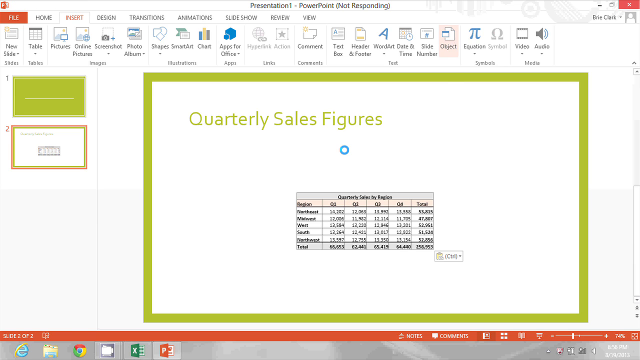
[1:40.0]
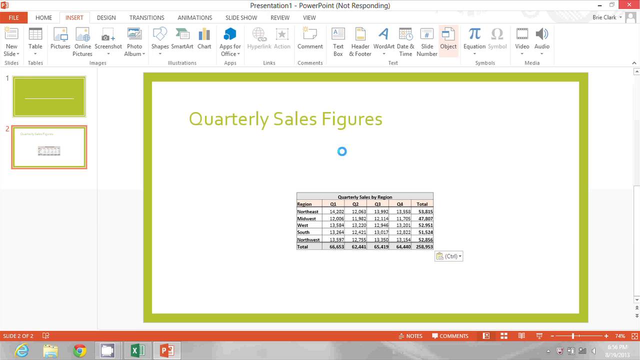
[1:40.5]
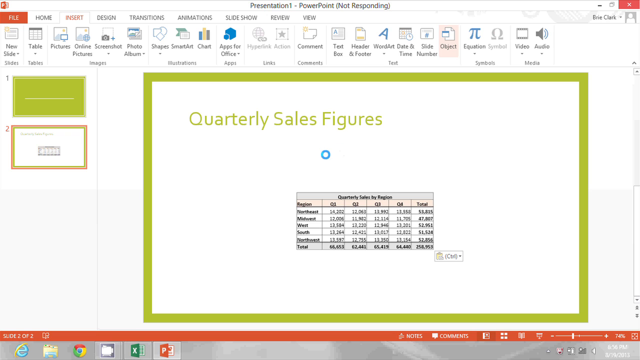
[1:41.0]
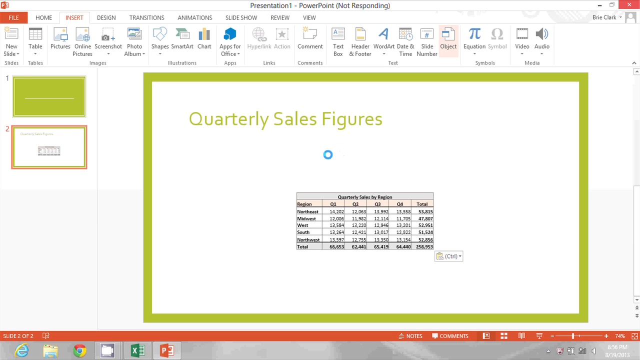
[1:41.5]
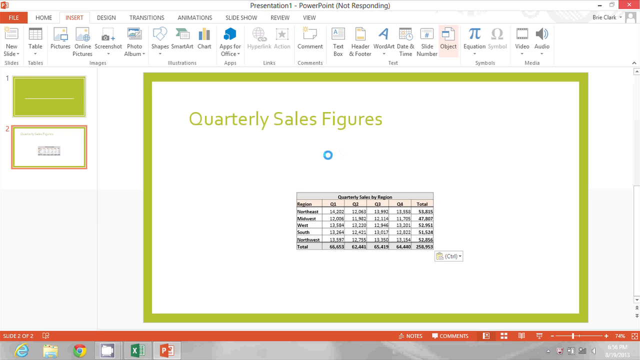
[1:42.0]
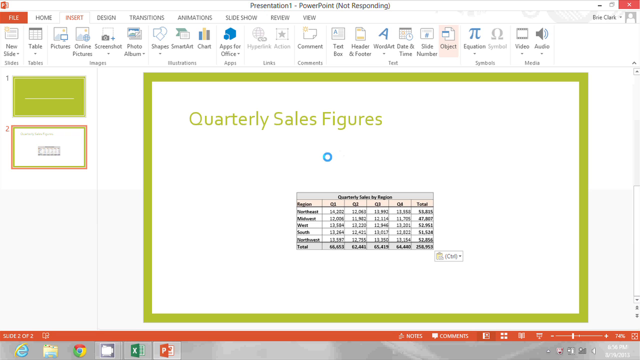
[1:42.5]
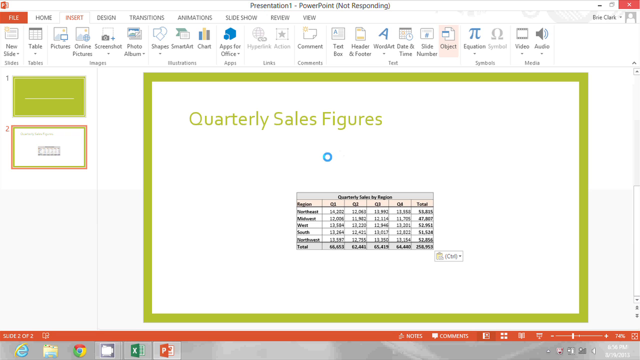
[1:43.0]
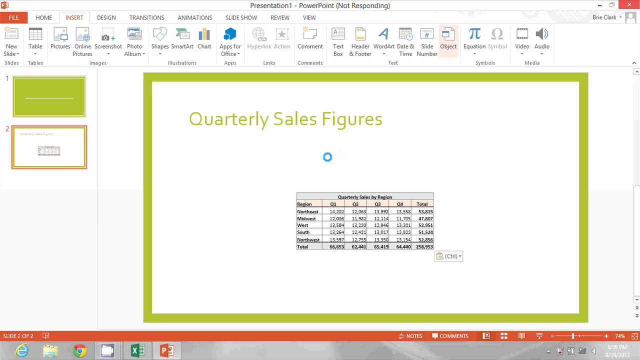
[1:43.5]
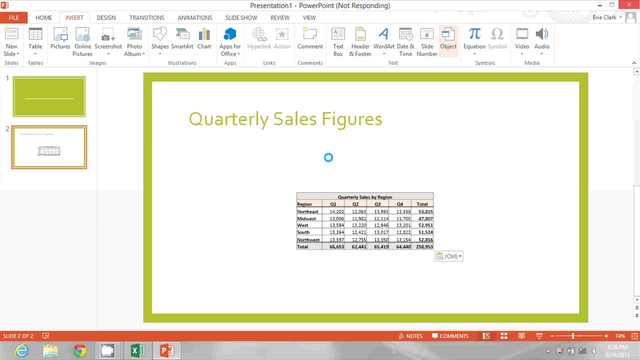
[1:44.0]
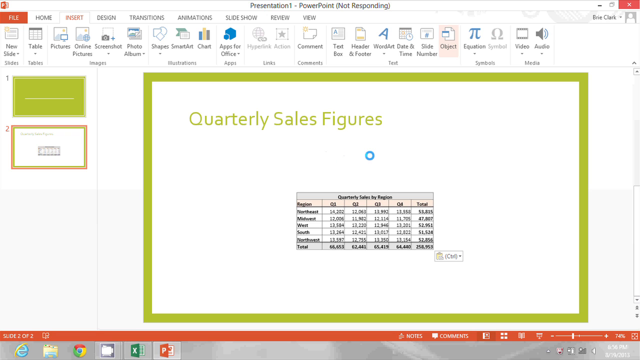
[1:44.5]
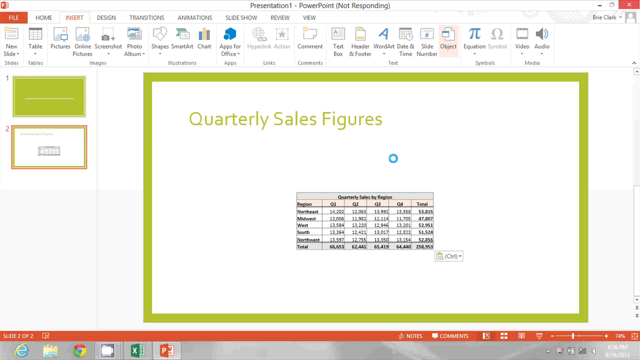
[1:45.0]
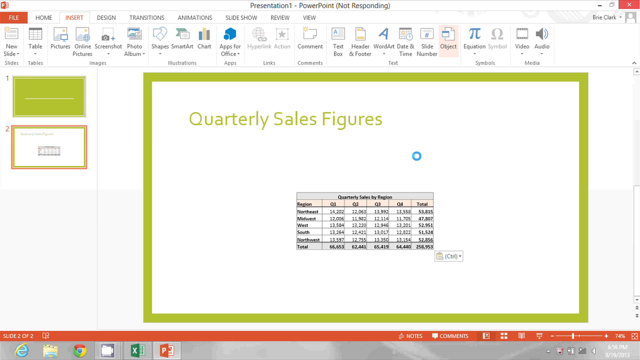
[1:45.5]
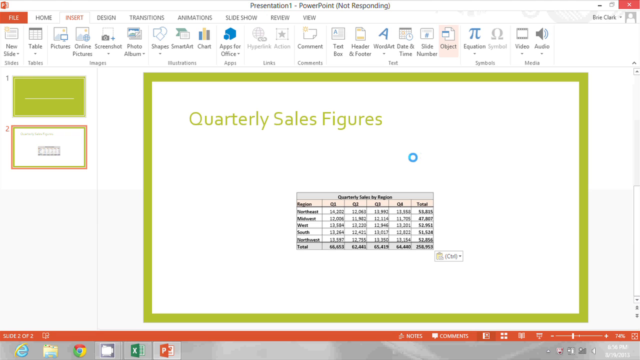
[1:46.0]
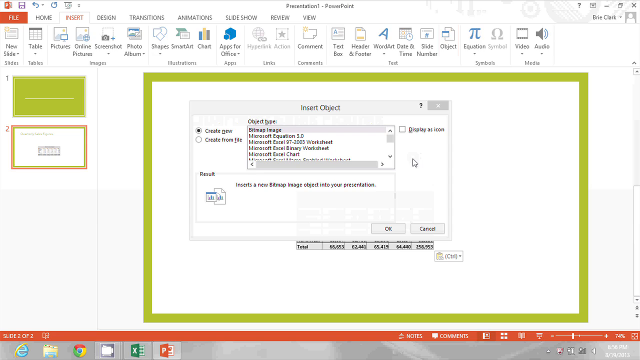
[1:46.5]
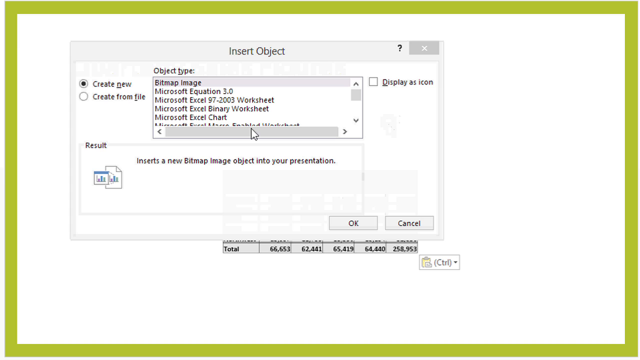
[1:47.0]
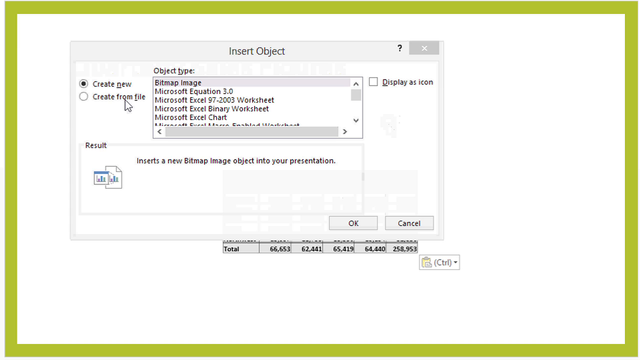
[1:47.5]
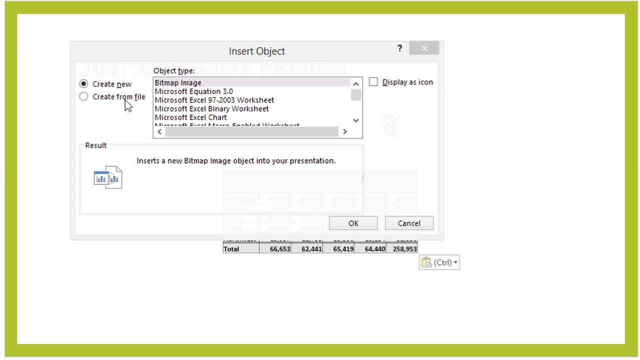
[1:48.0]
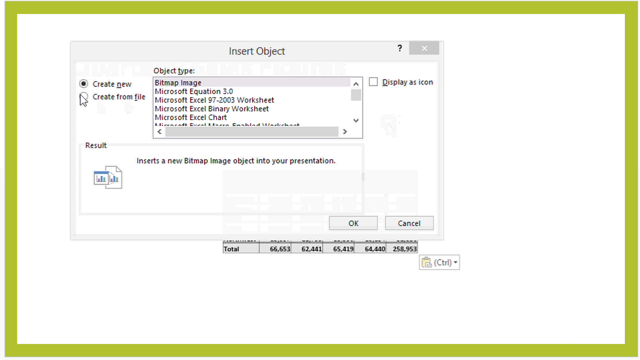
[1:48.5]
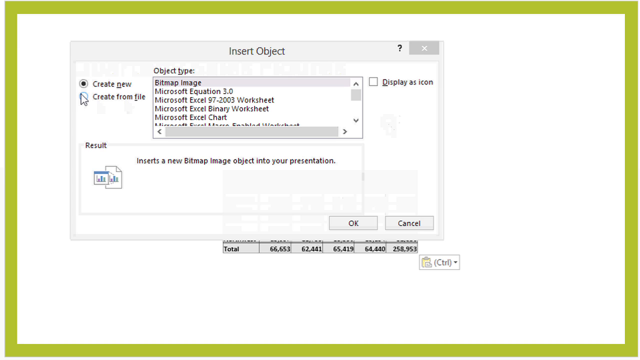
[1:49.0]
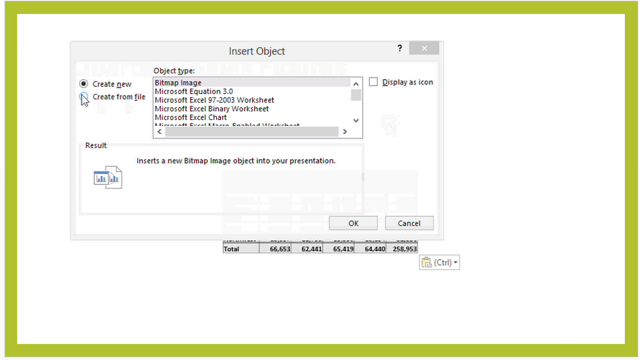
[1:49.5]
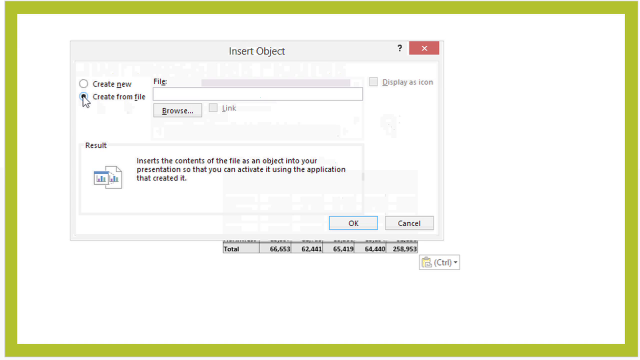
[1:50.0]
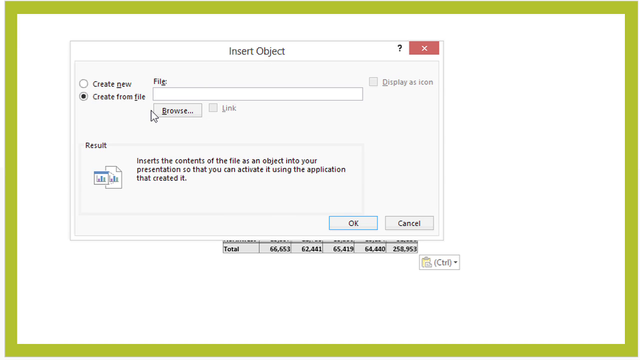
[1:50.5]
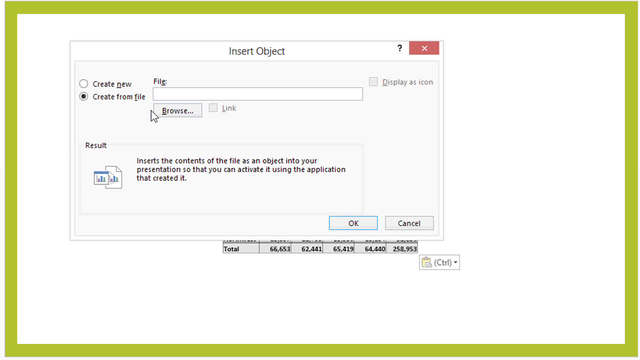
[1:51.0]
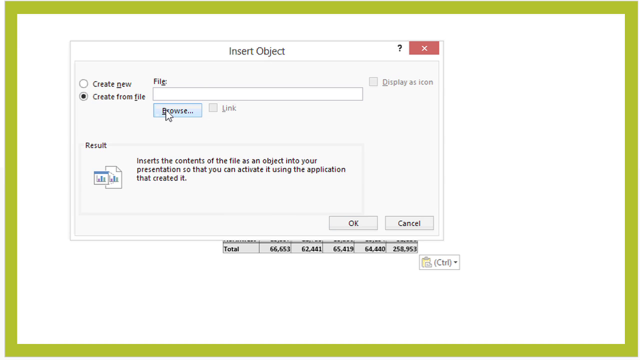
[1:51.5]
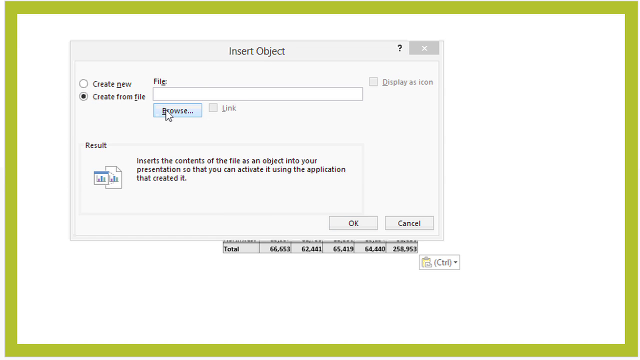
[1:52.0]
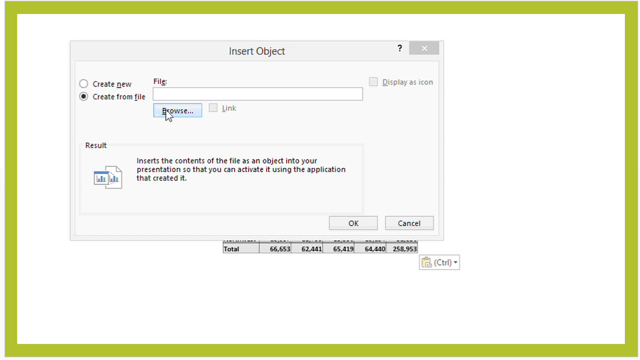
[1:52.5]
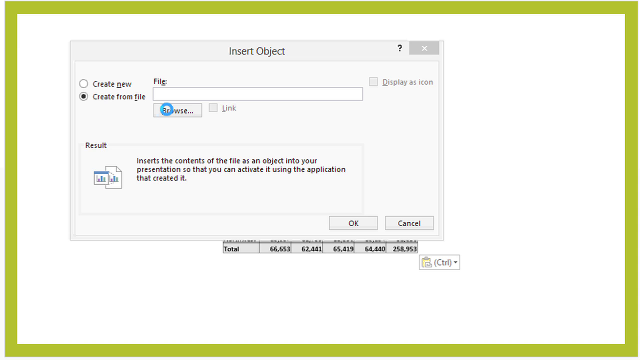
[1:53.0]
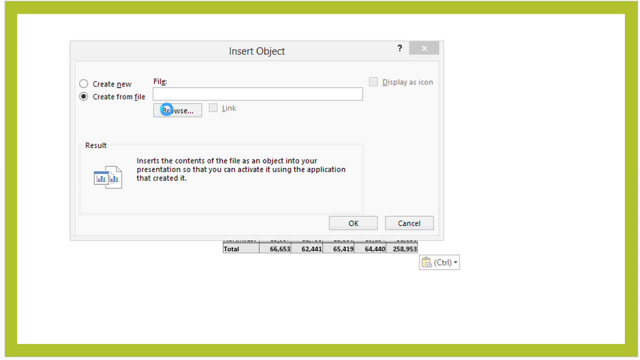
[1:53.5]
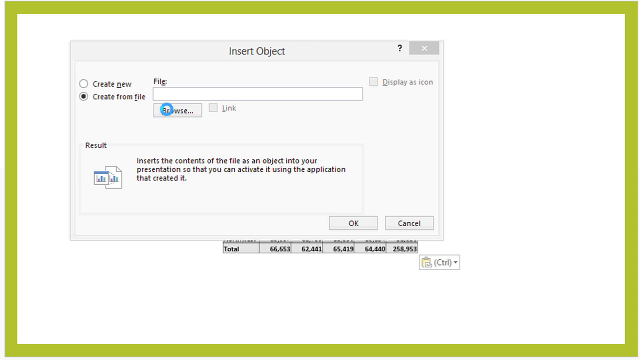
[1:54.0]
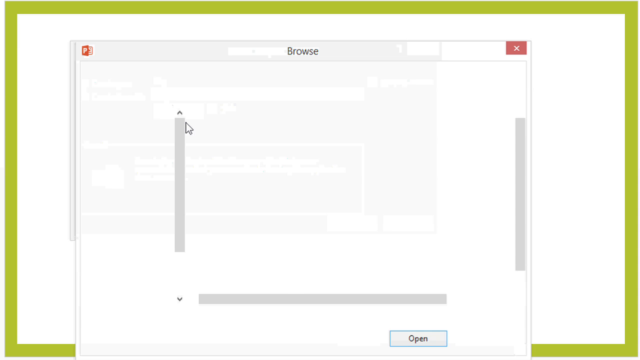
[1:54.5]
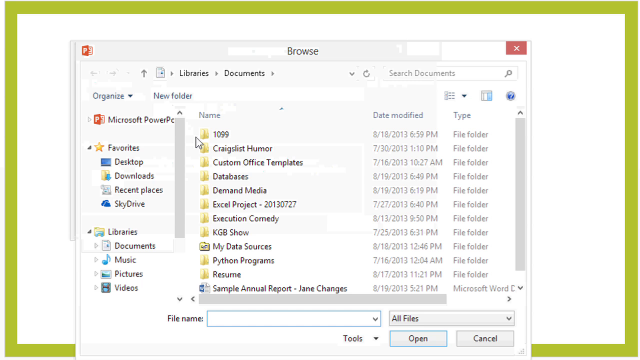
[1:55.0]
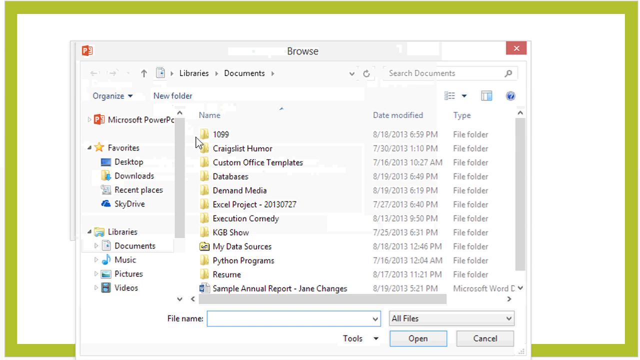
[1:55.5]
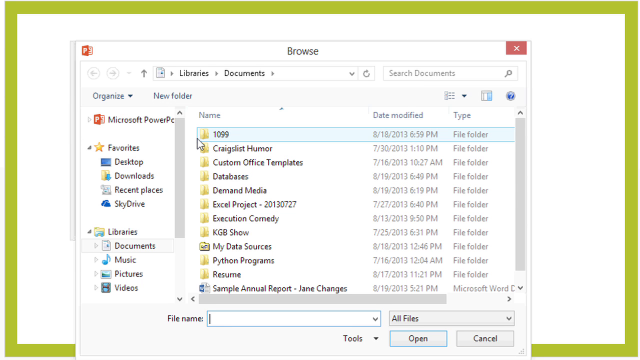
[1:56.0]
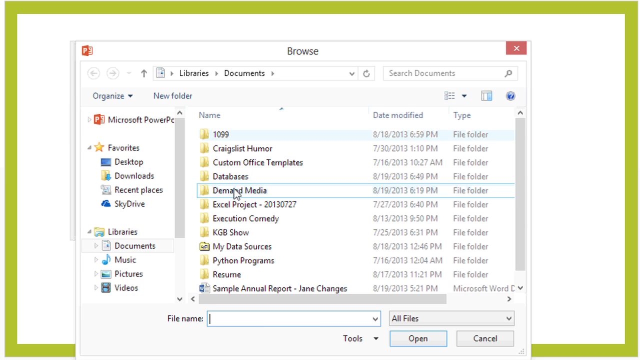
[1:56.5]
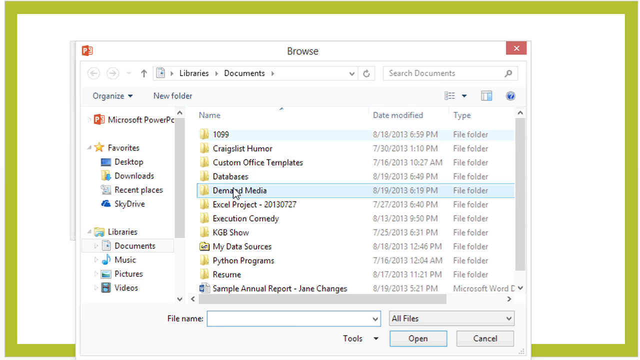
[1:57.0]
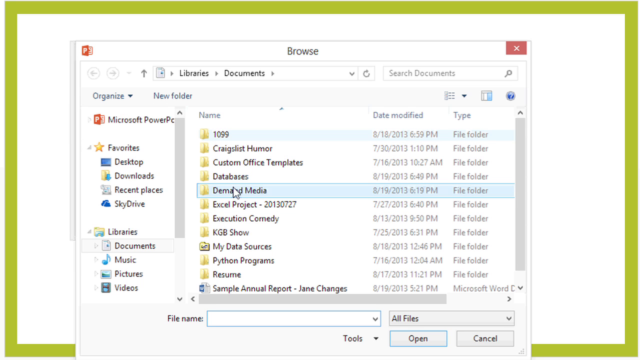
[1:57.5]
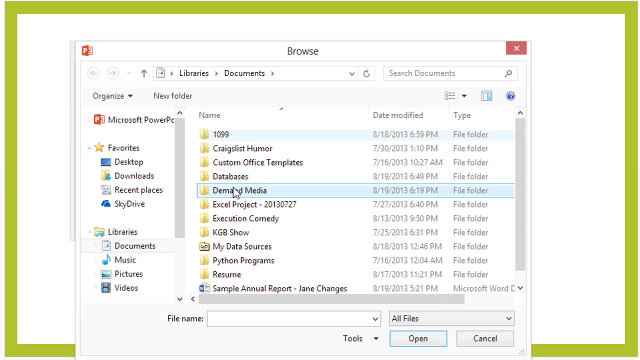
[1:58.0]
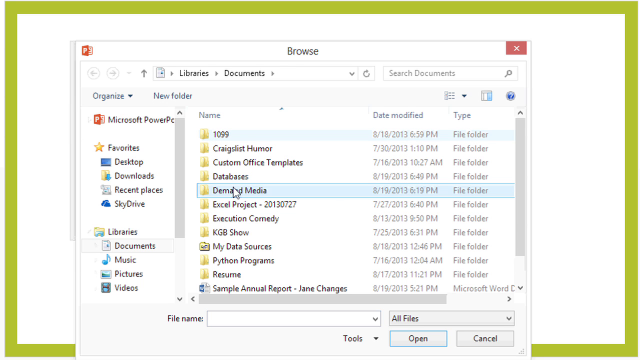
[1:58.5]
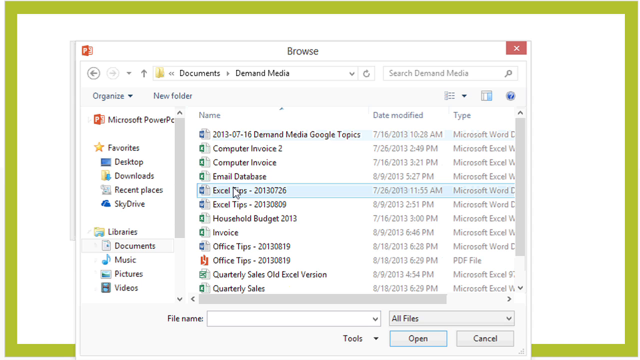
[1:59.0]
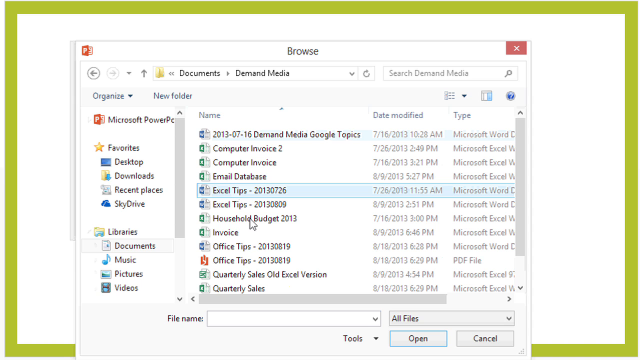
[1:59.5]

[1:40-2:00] A computer page shows quarterly sales figures for a company, with a graph giving a numerical value for each quarter. Someone moves a cursor around, and a pop-up reading "insert object" appears as the cursor moves, clicks and creates. Another page appears and keeps turning over. The screen shows items already on the computer, with a bar reading "favorites" and frequently used items. The page turns over, a blue circle goes around on the front of the page, and then a browse page appears, where the history list is looked through. "Excel tips" is clicked, leading to the next page.